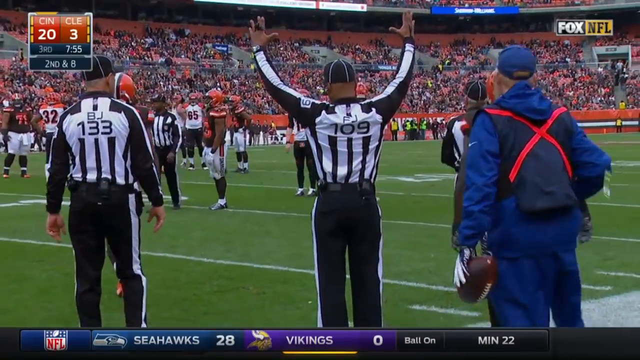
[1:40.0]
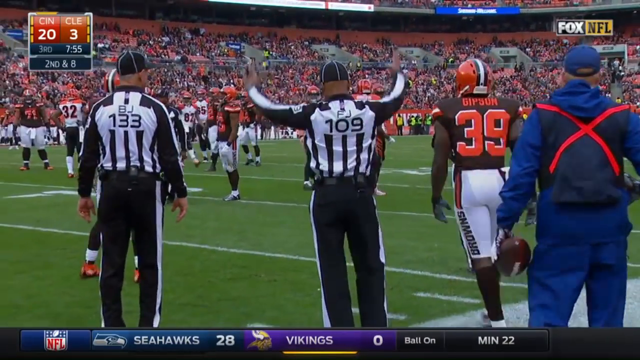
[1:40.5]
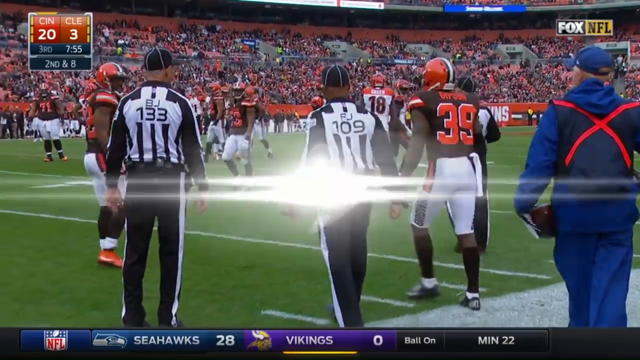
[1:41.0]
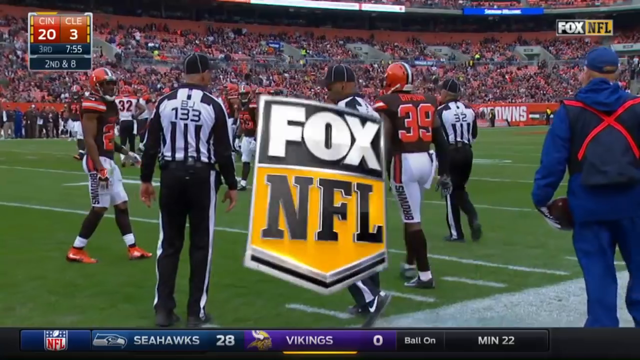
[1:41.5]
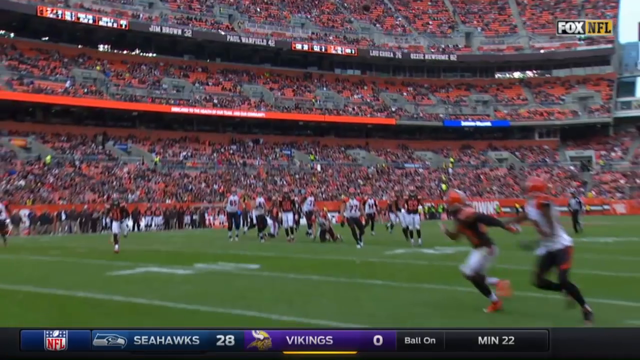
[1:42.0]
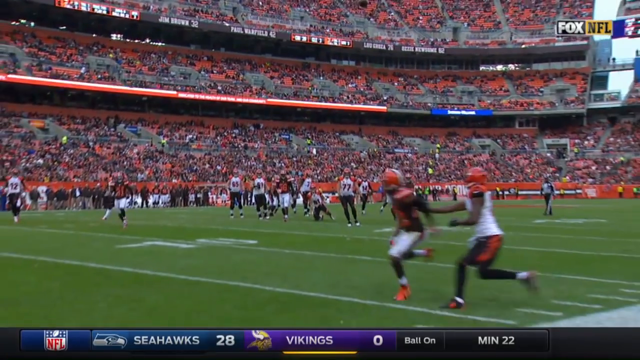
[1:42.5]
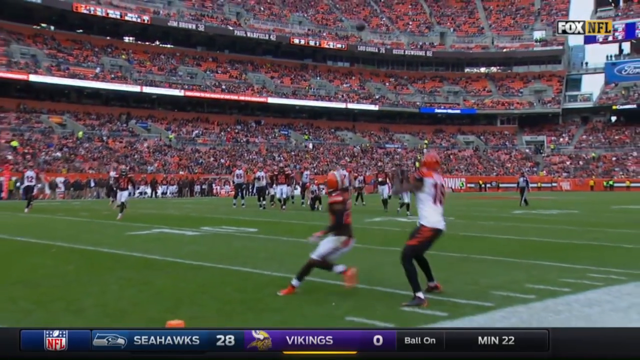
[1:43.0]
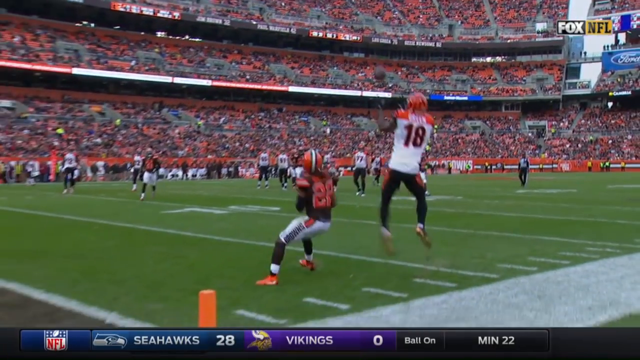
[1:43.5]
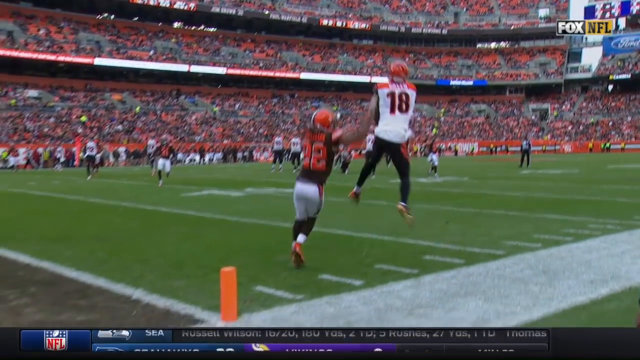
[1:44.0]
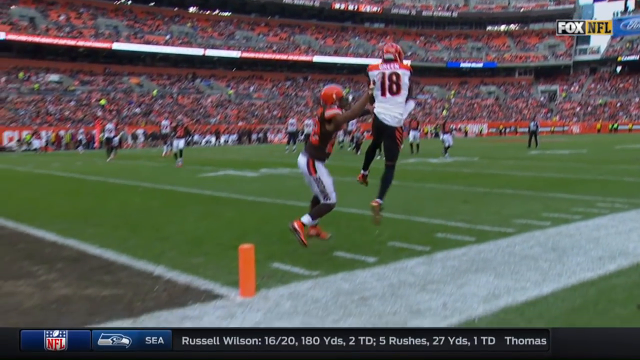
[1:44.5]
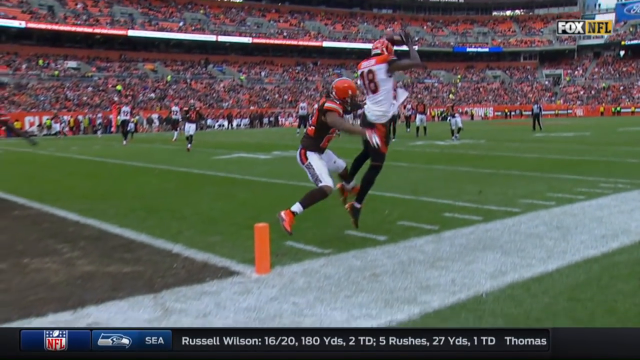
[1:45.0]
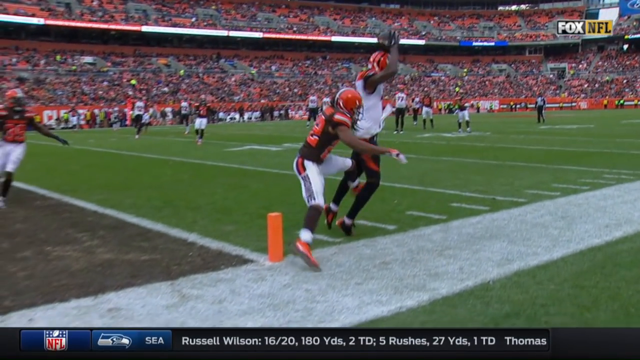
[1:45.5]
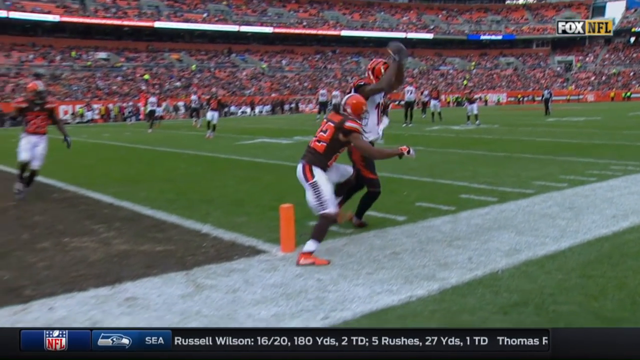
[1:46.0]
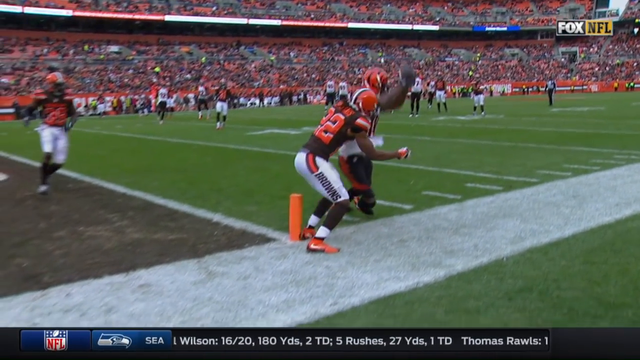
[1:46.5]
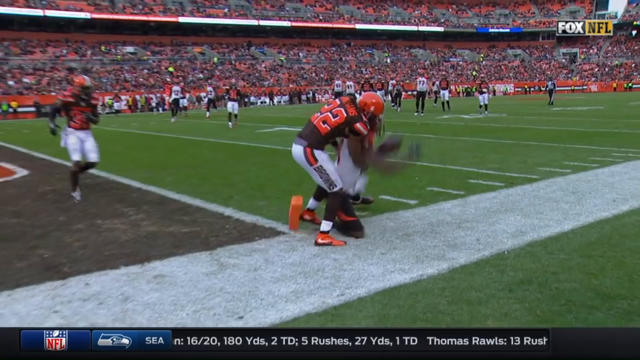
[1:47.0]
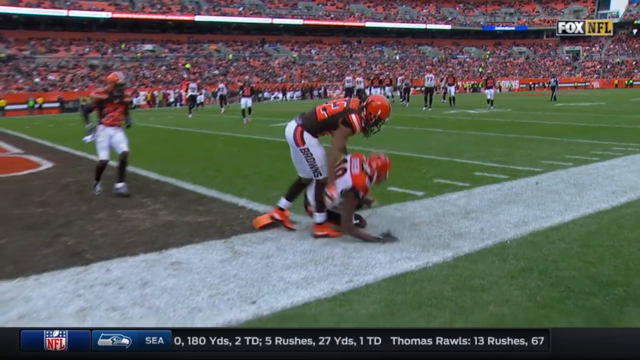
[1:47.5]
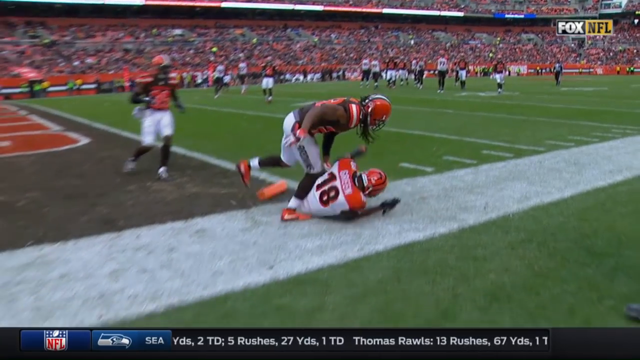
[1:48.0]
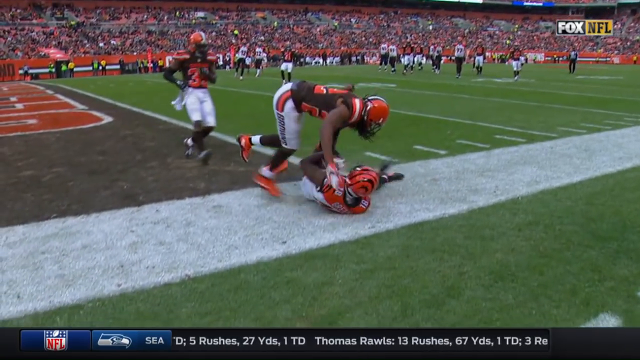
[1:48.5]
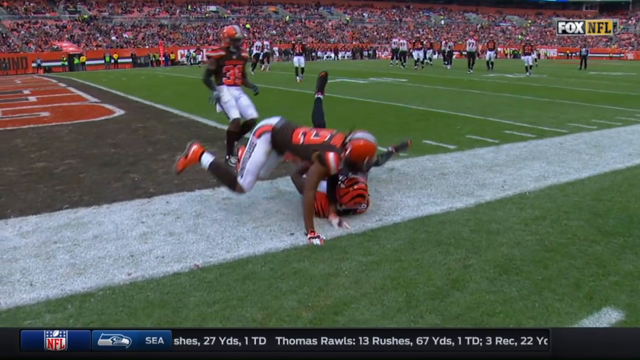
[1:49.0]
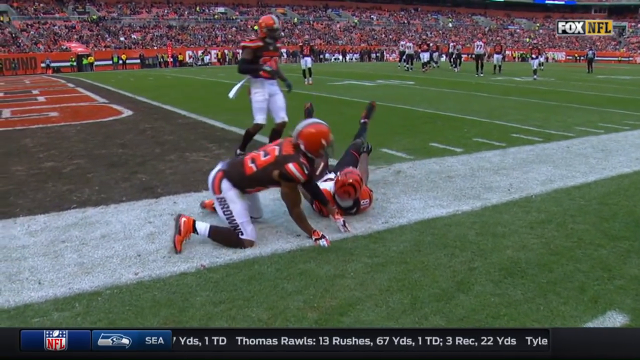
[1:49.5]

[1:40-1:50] The aftermath of Green's catch shows he got his feet down within the bounds of play, beating the defensive back and landing safely. The umpires are happy with the play. Cleveland Browns defensive back number 22 is involved. A score update shows the Seattle Seahawks leading the Minnesota Vikings 28-0. Seahawks quarterback Russell Wilson has completed 16 of 20 passes for 180 yards and 2 touchdowns and has rushed 5 times for 27 yards and a touchdown; teammate Thomas Rawls has rushed 13 times for 67 yards and a touchdown.